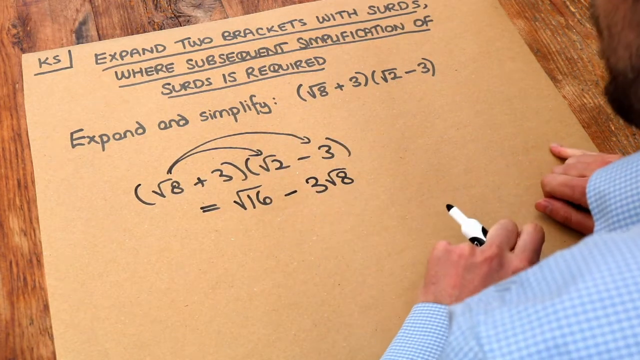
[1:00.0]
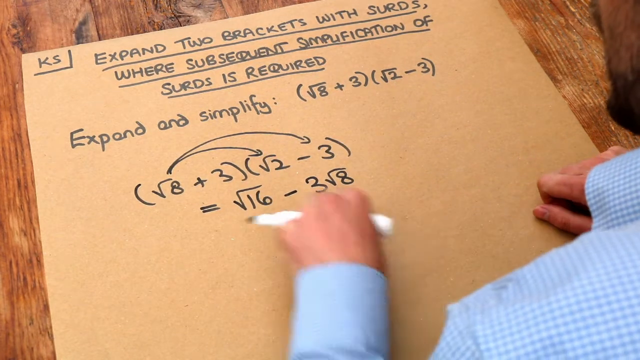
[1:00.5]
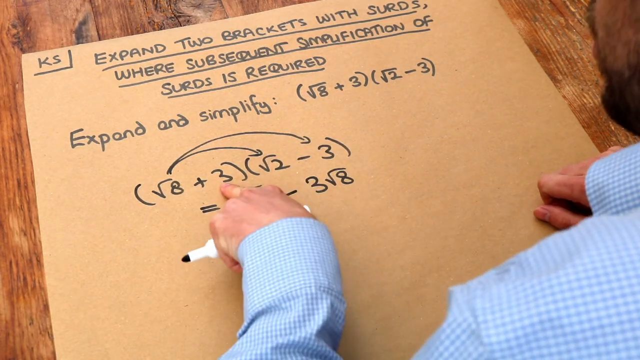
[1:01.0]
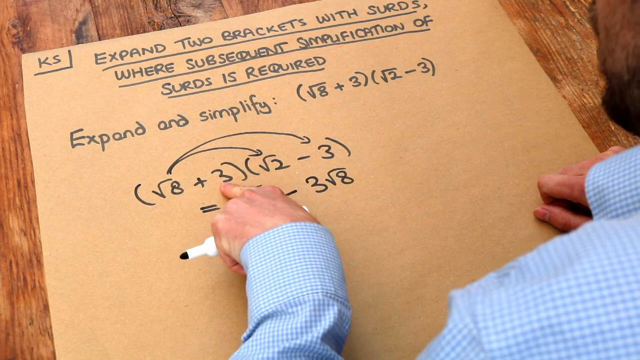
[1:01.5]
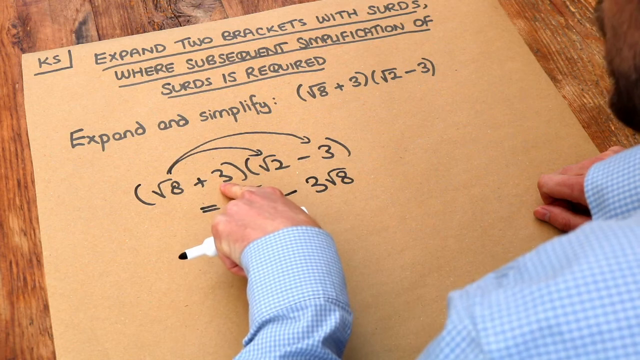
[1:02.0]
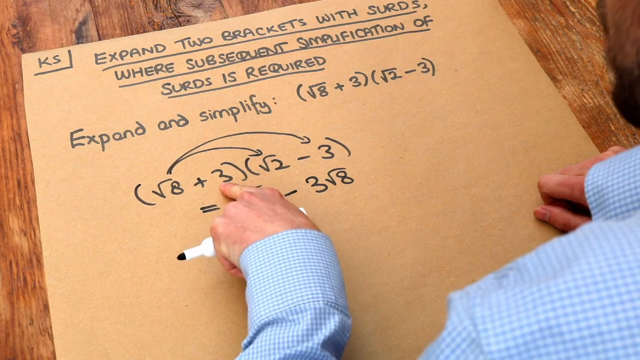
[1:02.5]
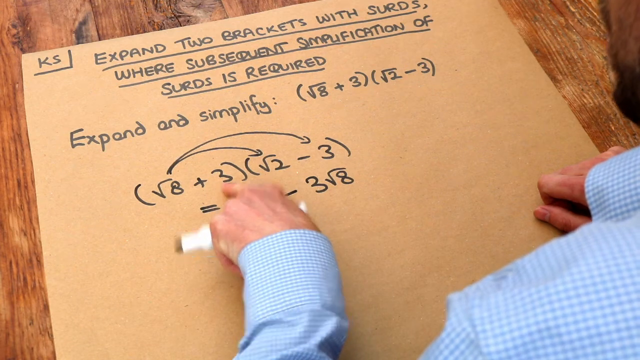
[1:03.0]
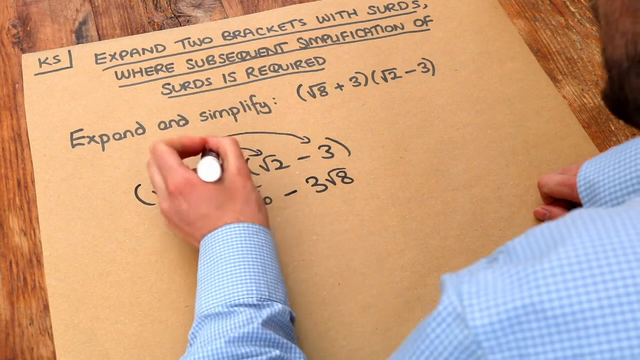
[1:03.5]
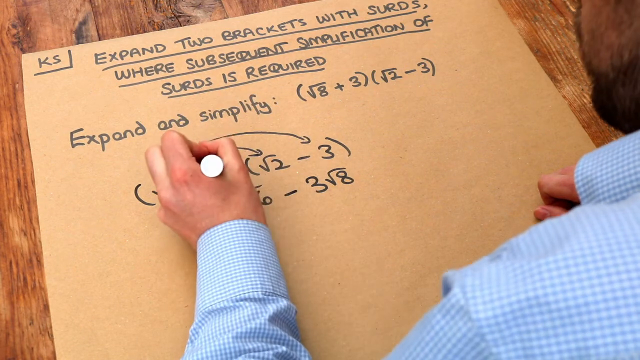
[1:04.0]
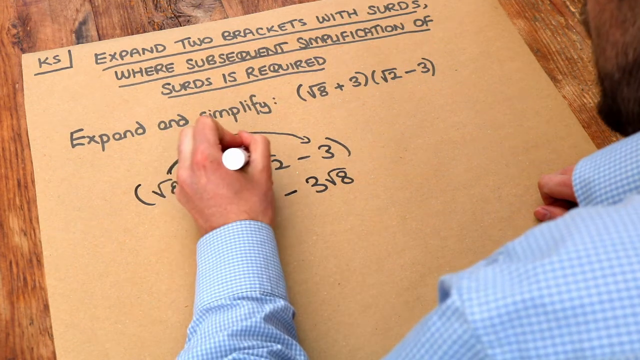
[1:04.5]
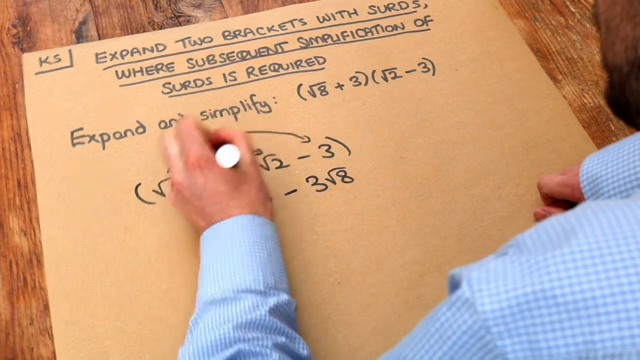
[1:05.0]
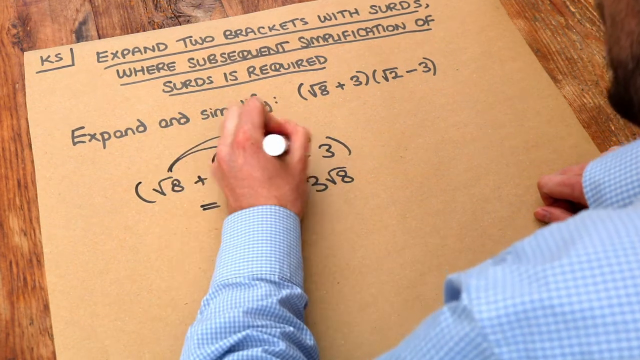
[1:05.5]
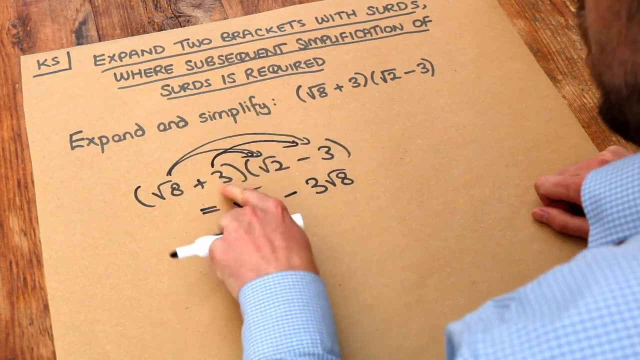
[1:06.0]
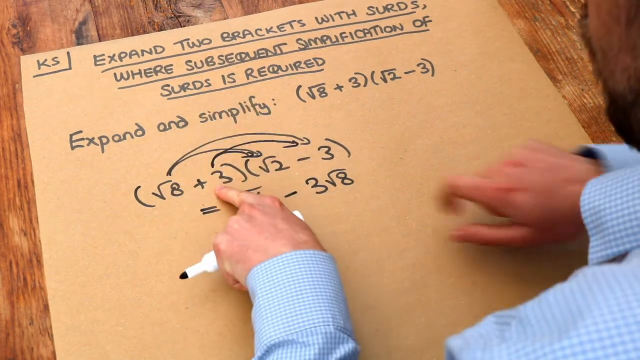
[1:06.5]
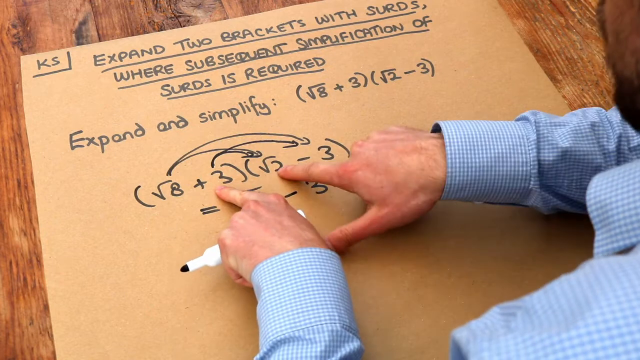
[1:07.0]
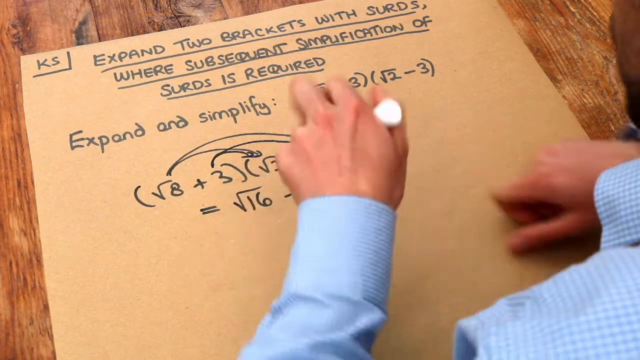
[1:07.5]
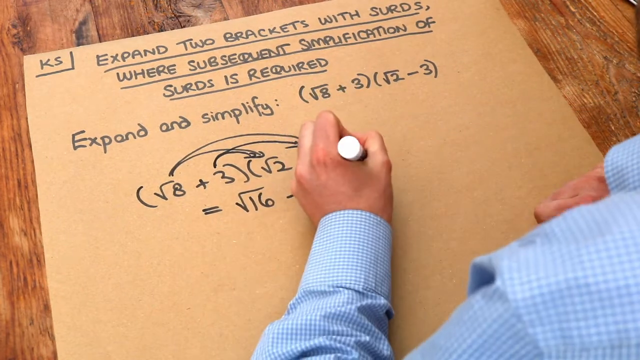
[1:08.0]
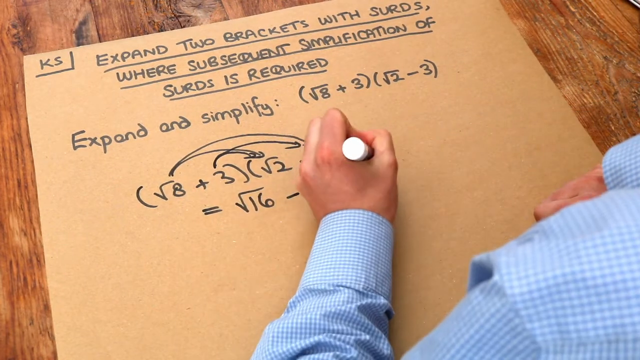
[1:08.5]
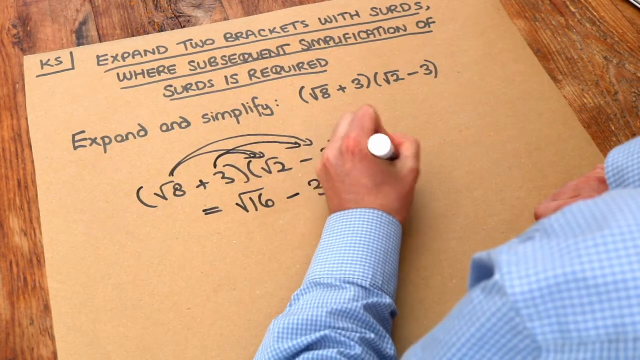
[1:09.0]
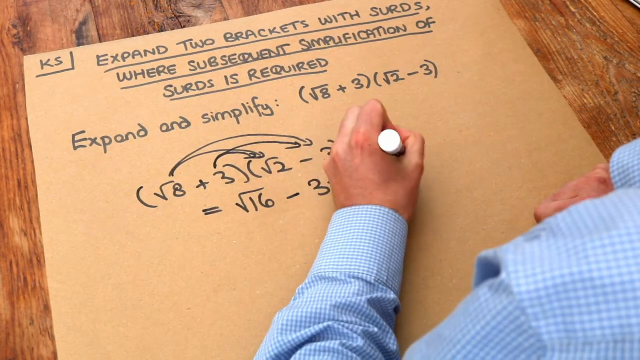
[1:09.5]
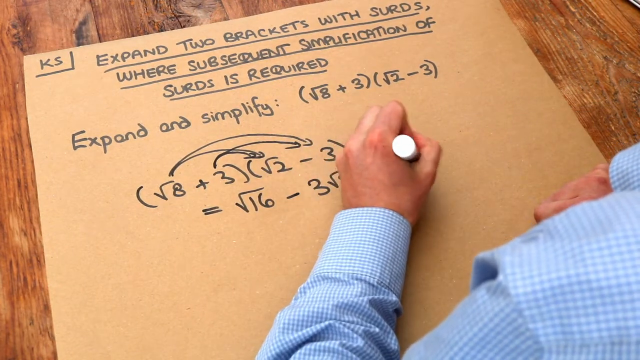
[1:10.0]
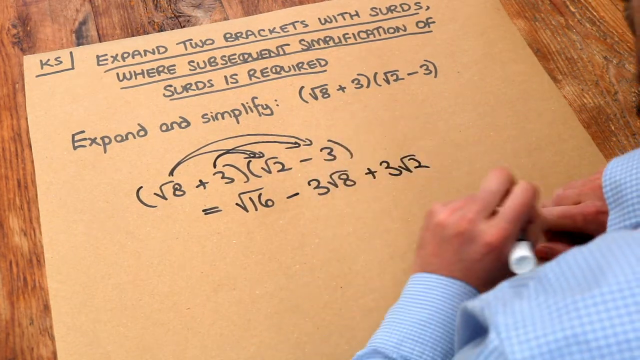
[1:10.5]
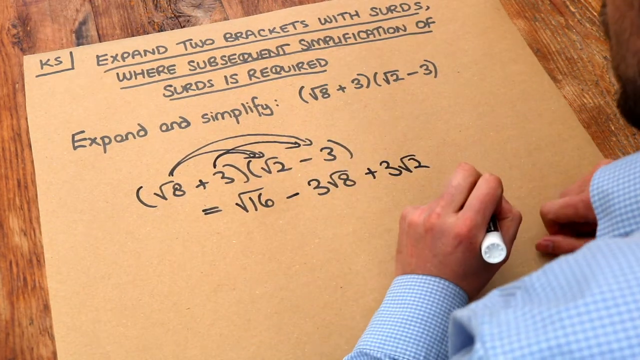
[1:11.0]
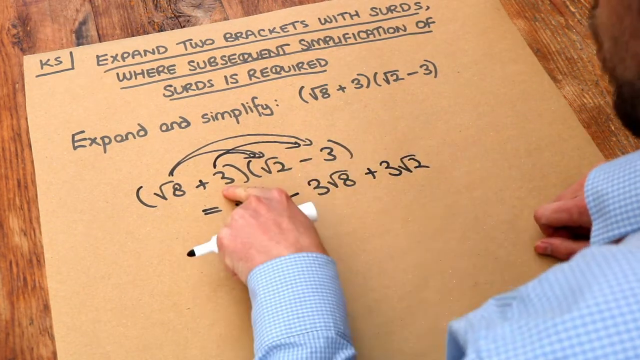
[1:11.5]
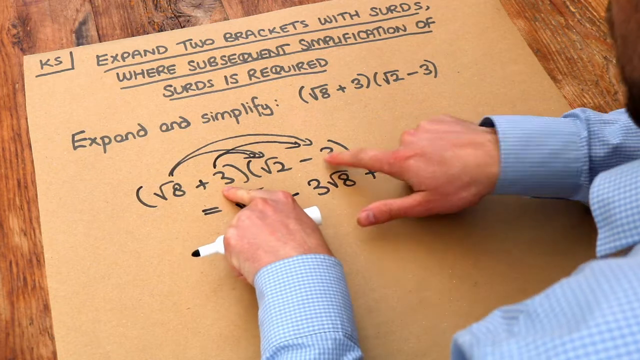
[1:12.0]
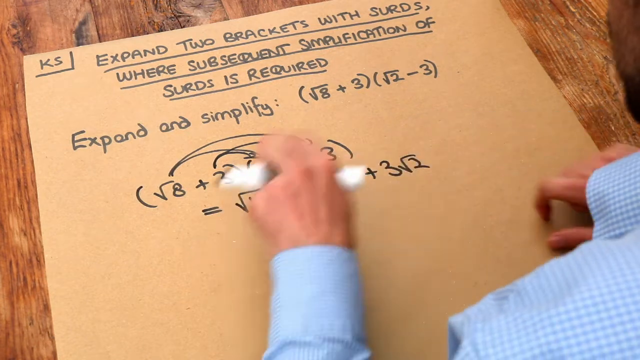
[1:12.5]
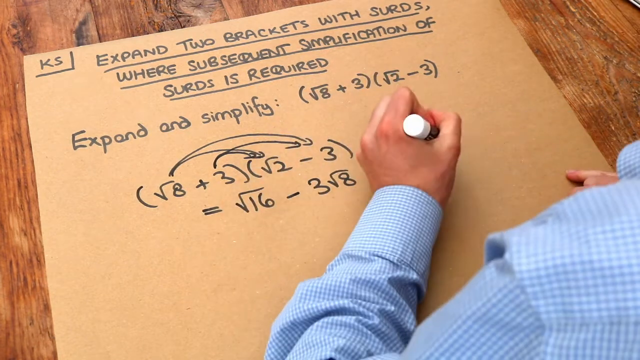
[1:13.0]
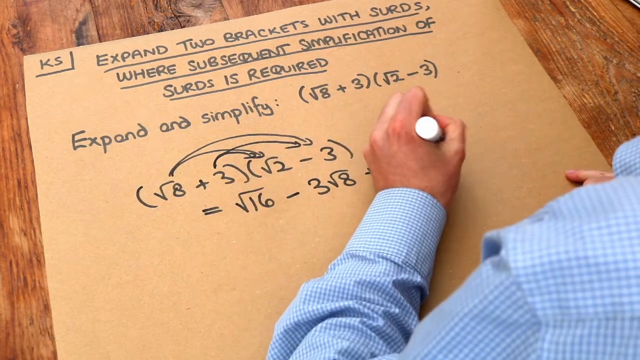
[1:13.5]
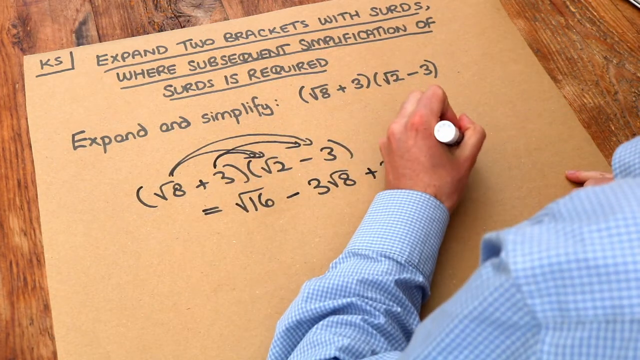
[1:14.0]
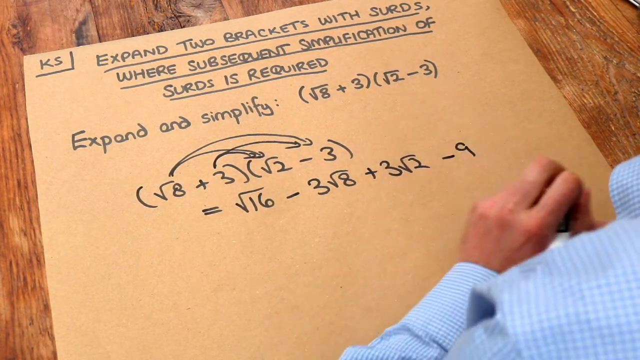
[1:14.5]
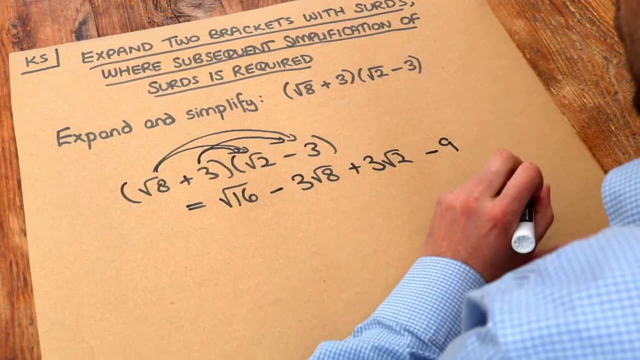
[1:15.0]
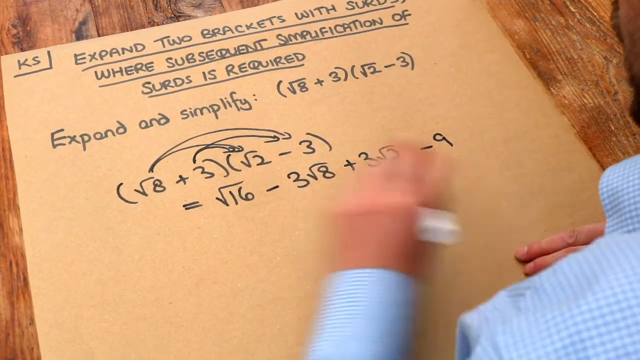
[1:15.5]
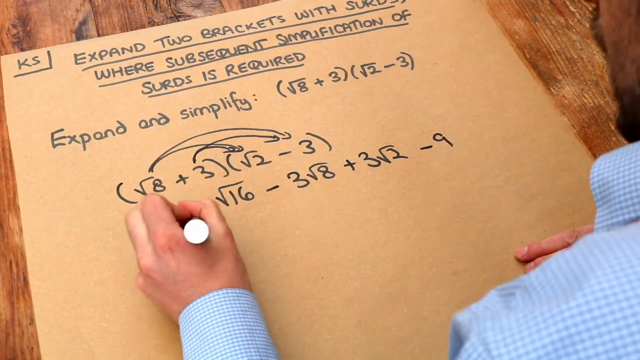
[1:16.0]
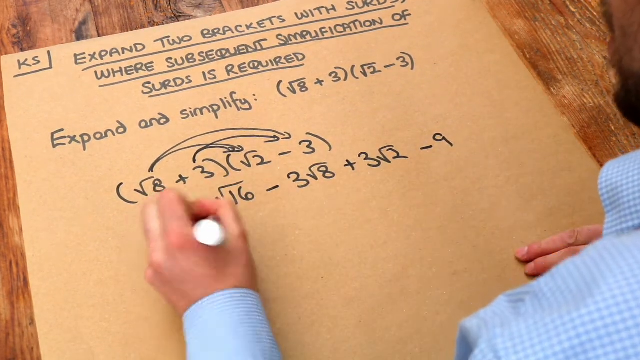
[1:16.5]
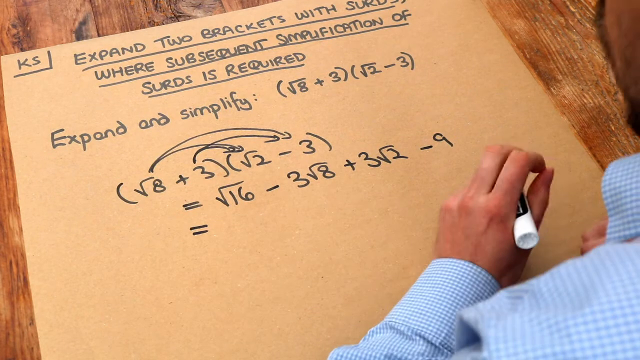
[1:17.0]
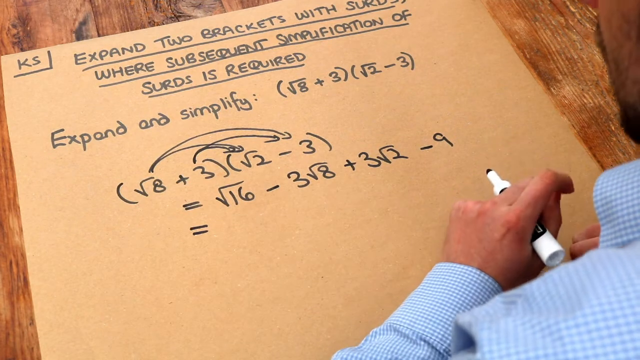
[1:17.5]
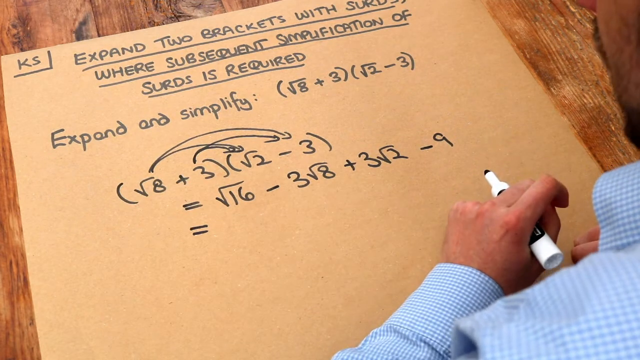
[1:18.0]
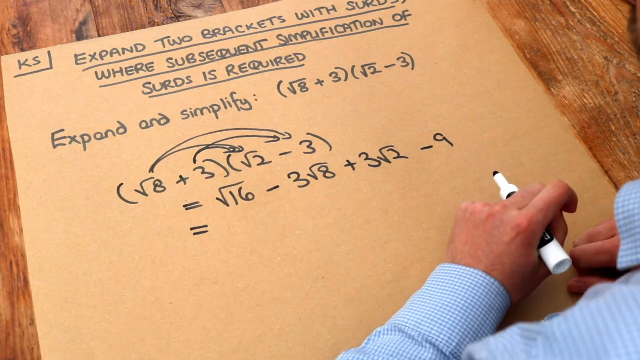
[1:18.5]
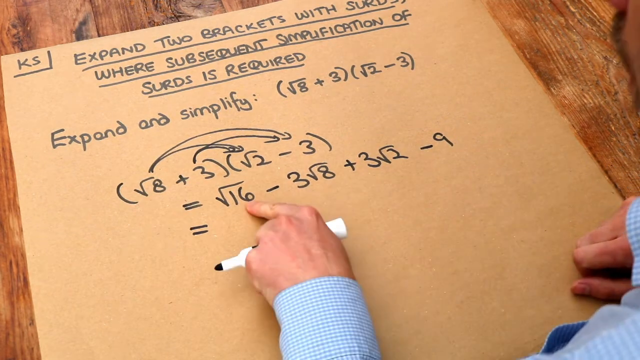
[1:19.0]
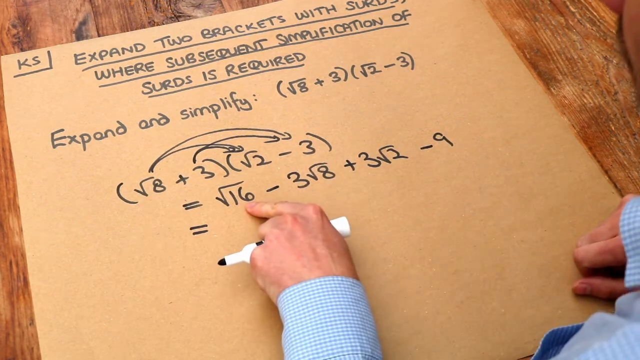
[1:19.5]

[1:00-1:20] He moves his hands back down to the right in front of him; only a little of the right hand's pointer finger and thumb shows. His left hand moves up and points at the square root of eight, then draws a line from the three over to the other three, points at the three on the left side, and he points at the square root of two with his right hand. Beside the three square root of eight he writes plus three square root of two, moves his hands back to the right, points at both threes again, and writes minus nine next to three square root of two. With his hands back near him, he writes another equal sign underneath that portion of the problem and moves his hands back to the right. His jaw is still moving. He palms at the square root of 16 with his left hand.